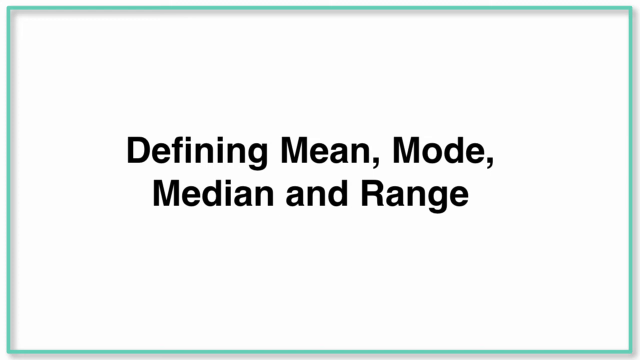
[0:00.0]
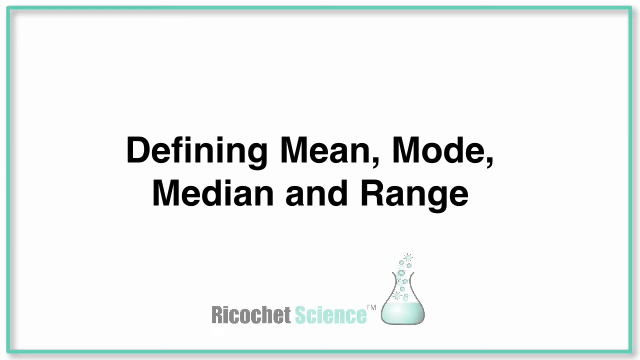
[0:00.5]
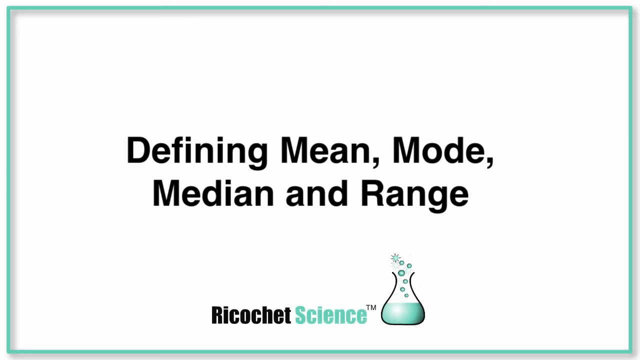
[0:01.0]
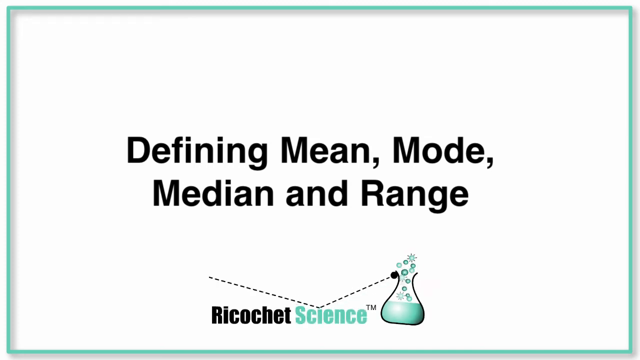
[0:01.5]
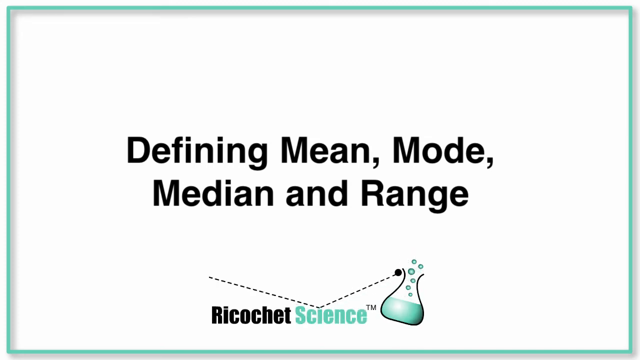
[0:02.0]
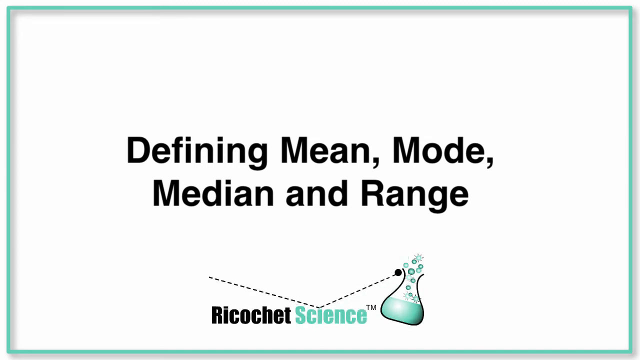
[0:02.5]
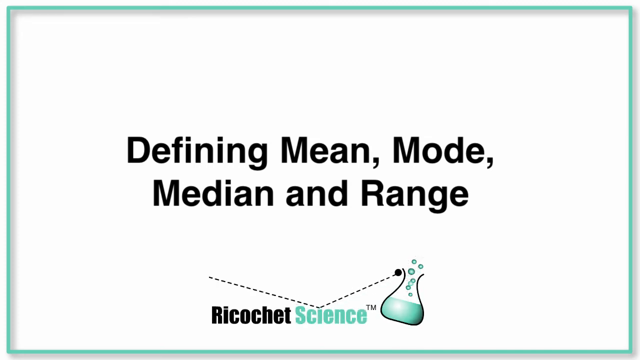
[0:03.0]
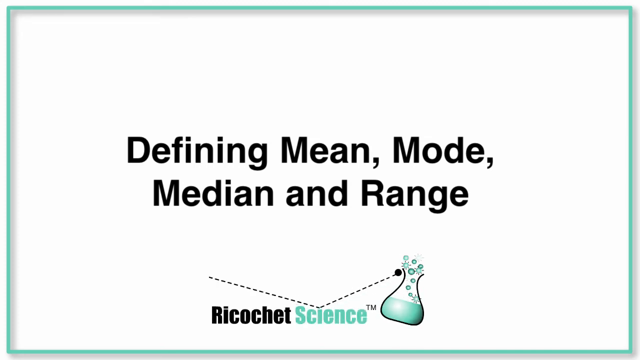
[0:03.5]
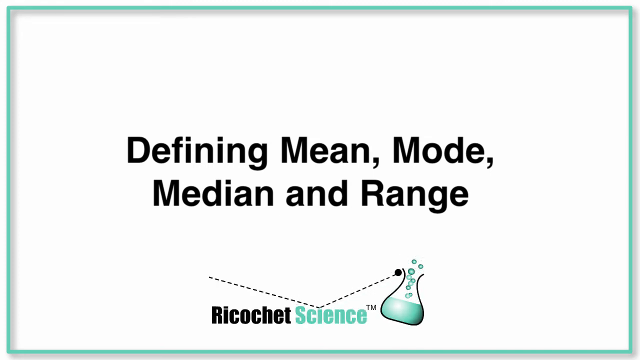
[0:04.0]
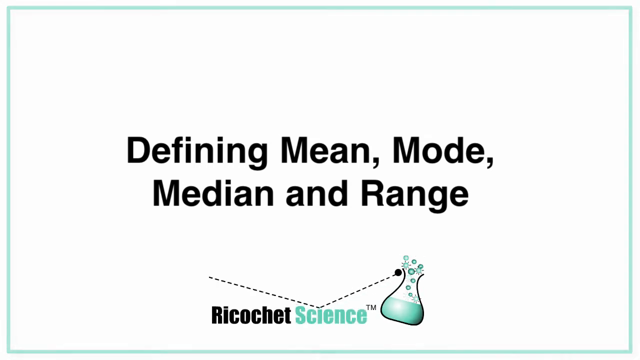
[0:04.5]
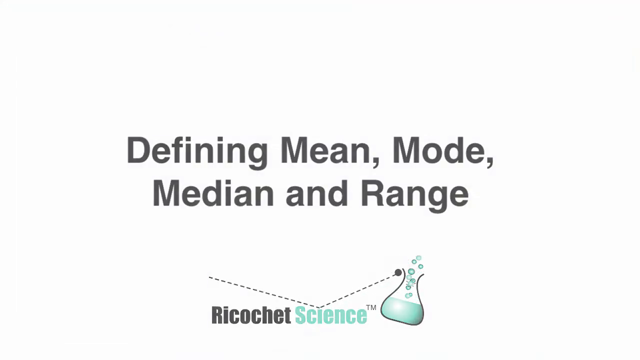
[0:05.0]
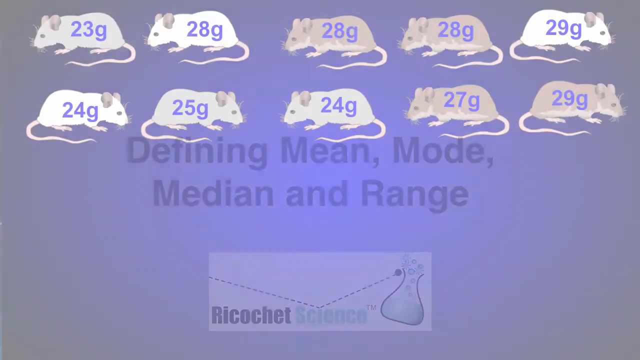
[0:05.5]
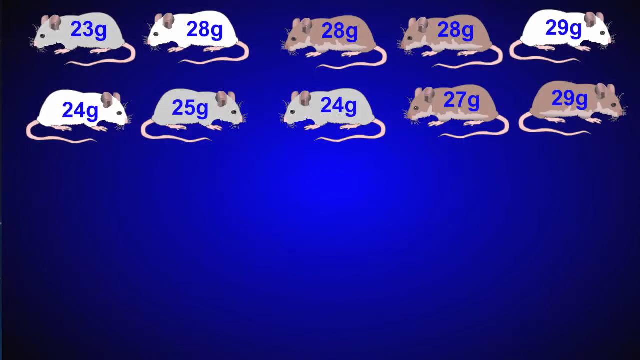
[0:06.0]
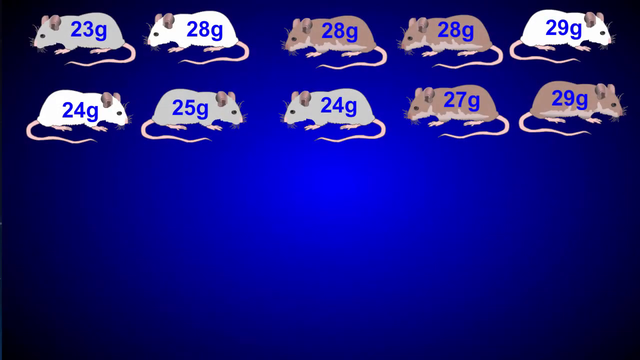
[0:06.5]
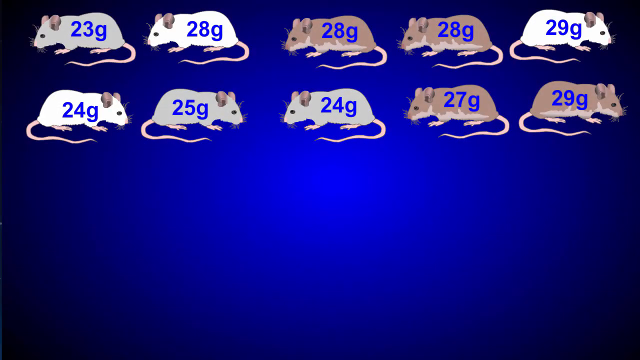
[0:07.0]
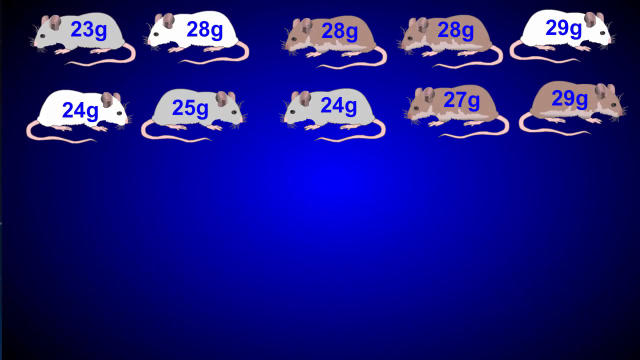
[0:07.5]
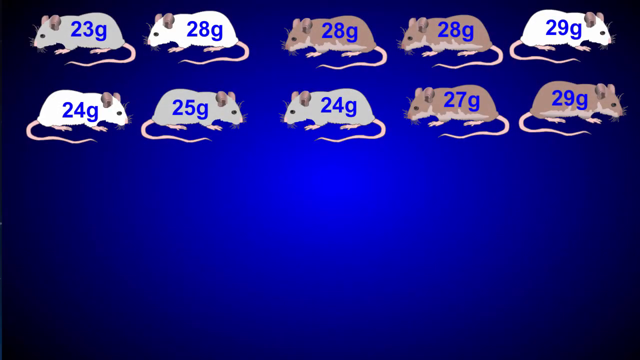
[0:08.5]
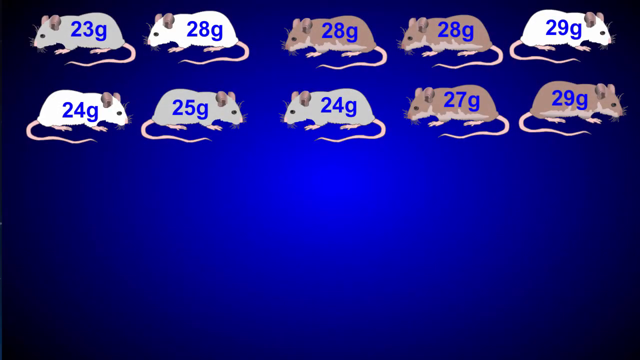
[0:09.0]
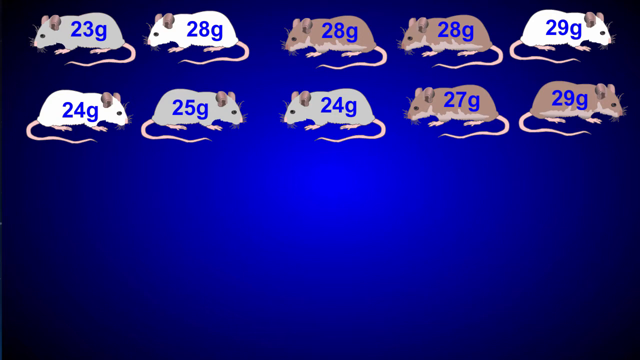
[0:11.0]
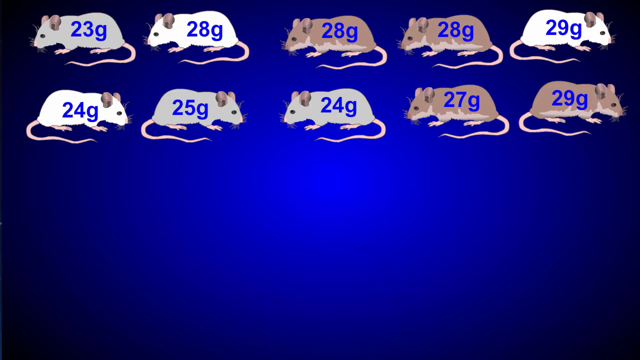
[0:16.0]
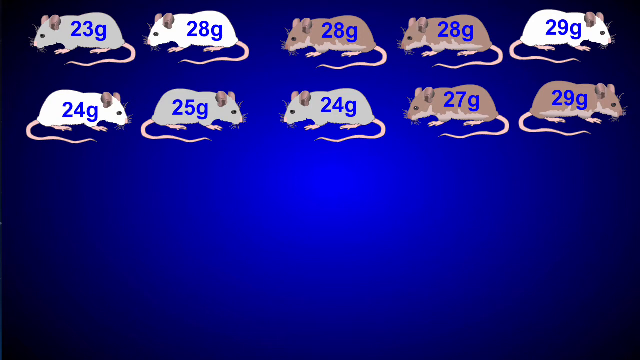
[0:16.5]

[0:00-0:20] A screen with a sort of lime green border shows black text reading "defining mean, mode, median, and range." At the bottom of the screen, text says it is from Ricochet Science, with "Ricochet" in all black and "Science" in a teal green color. A beaker next to it gets knocked over by the ricochet, which is sort of the site's logo. The video then goes to a screen with a number of rats, each with a different gram number on it. The numbers are 23, 24, 25, 27, 28 and 29, in varying amounts: one 23-gram mouse, two 24-gram mice, one 25-gram mouse, one 27-gram mouse, three 28-gram mice and two 29-gram mice.